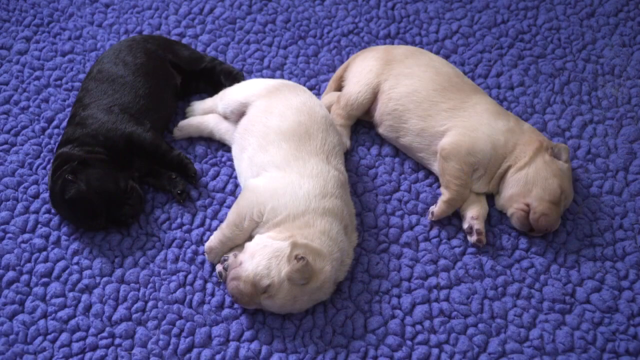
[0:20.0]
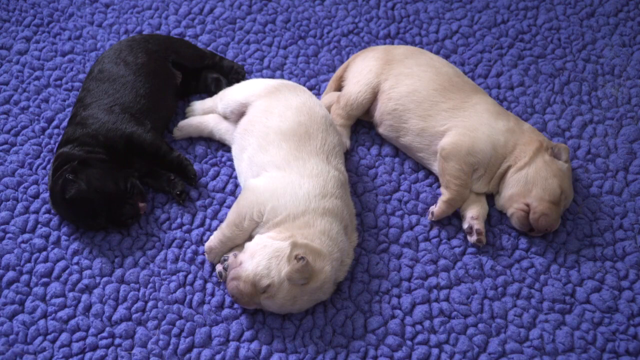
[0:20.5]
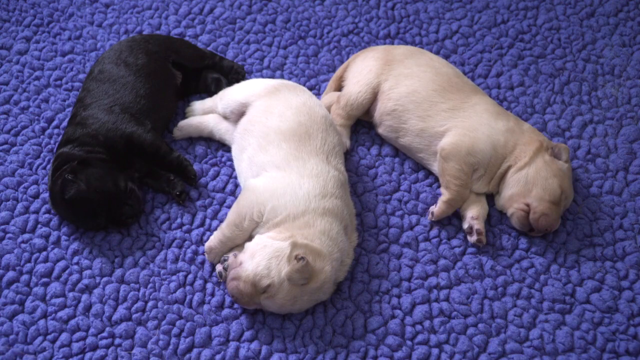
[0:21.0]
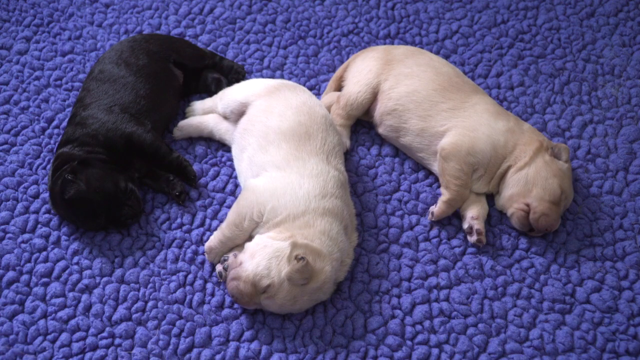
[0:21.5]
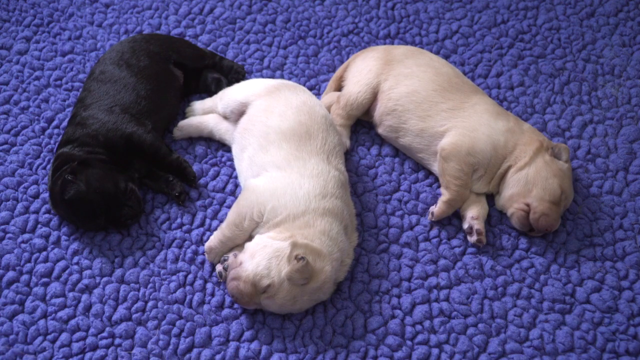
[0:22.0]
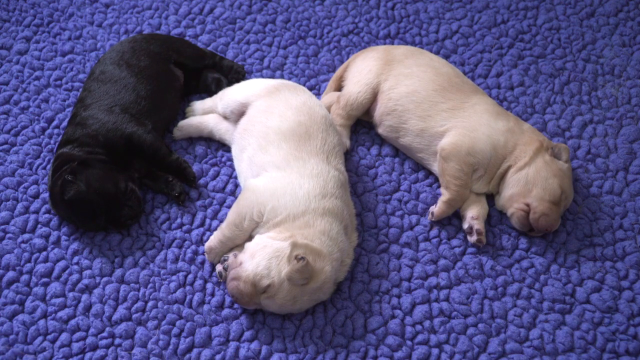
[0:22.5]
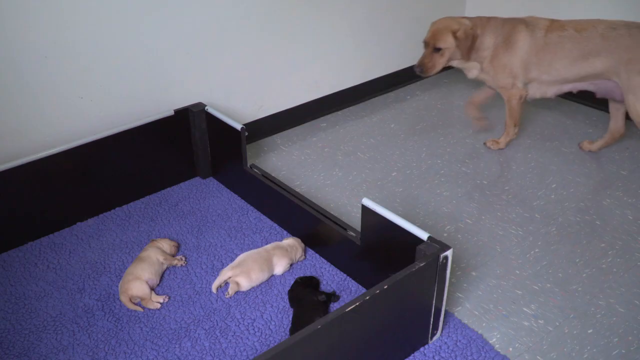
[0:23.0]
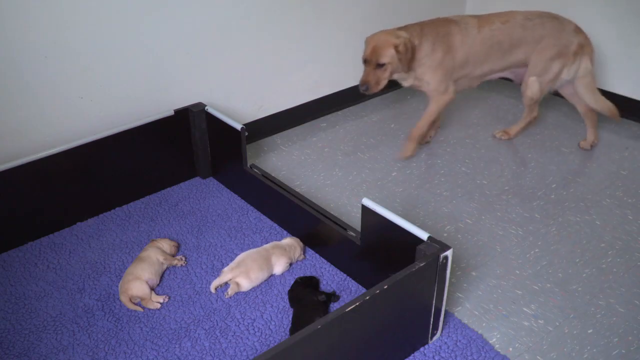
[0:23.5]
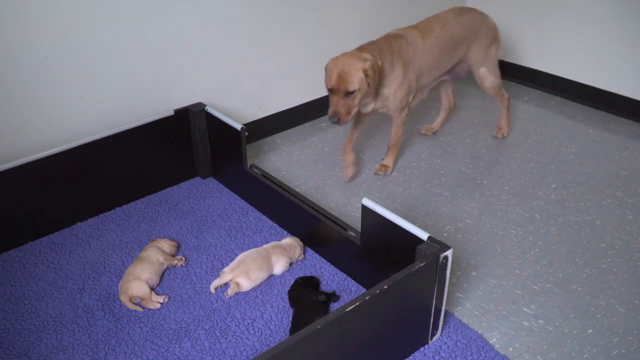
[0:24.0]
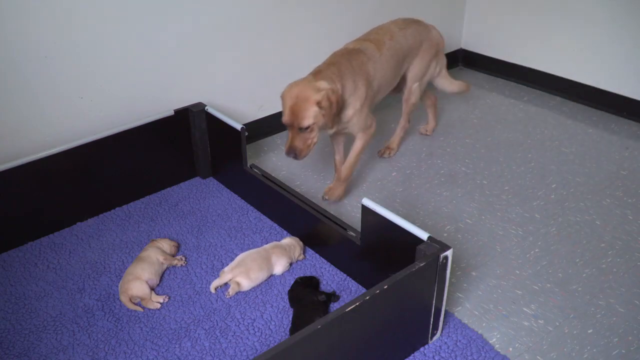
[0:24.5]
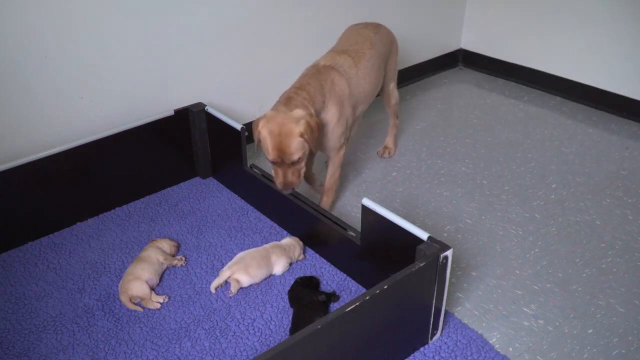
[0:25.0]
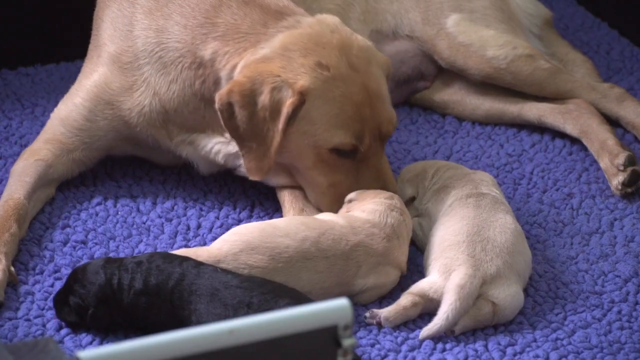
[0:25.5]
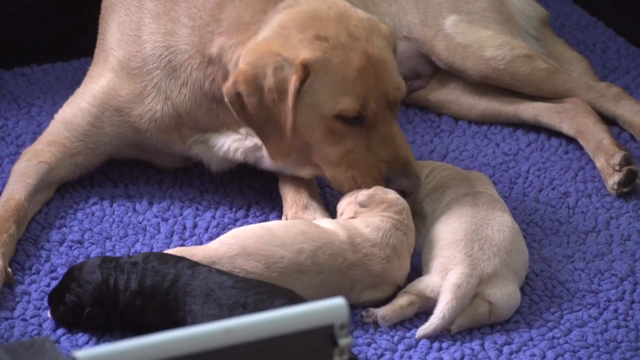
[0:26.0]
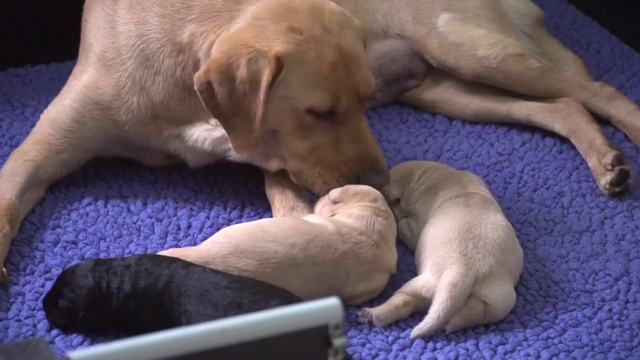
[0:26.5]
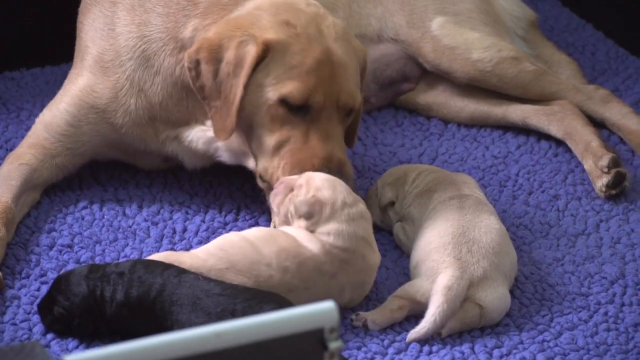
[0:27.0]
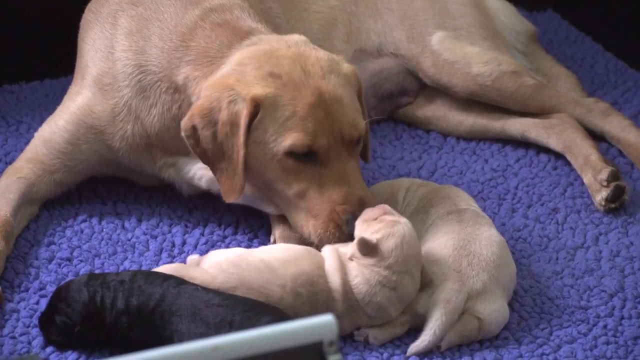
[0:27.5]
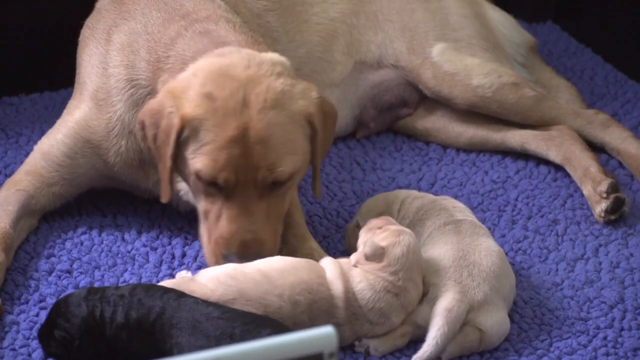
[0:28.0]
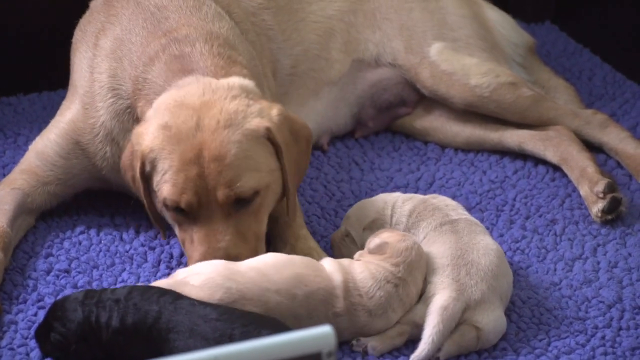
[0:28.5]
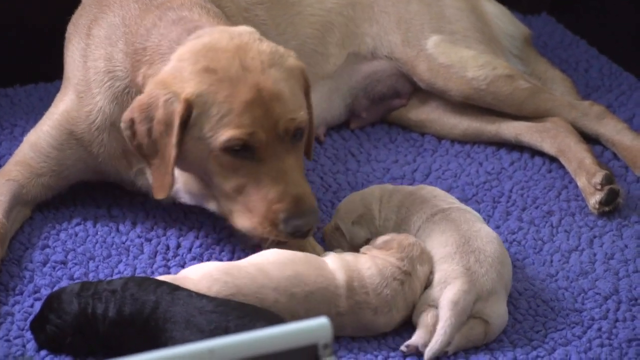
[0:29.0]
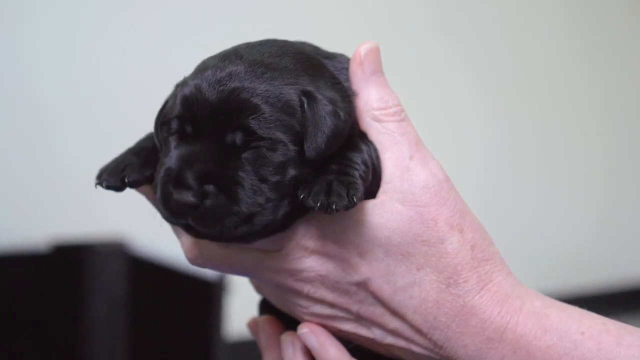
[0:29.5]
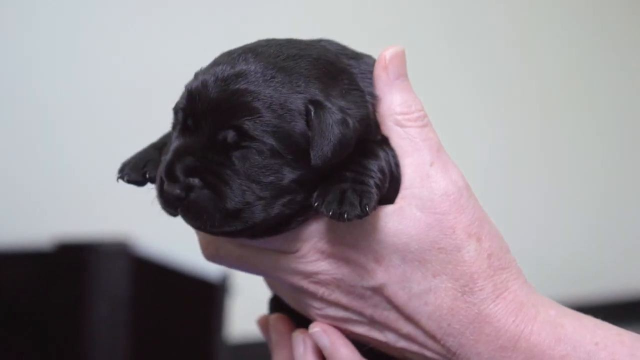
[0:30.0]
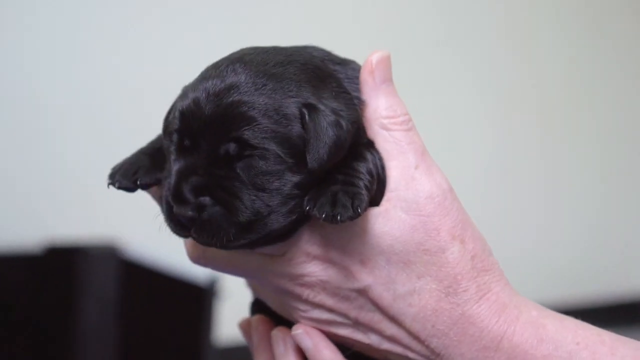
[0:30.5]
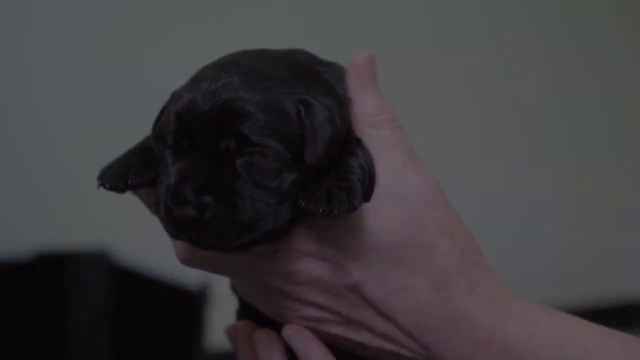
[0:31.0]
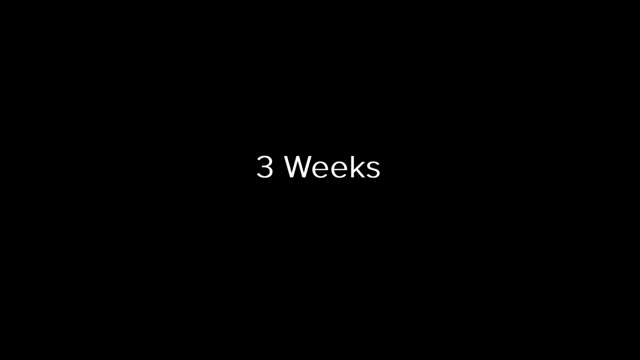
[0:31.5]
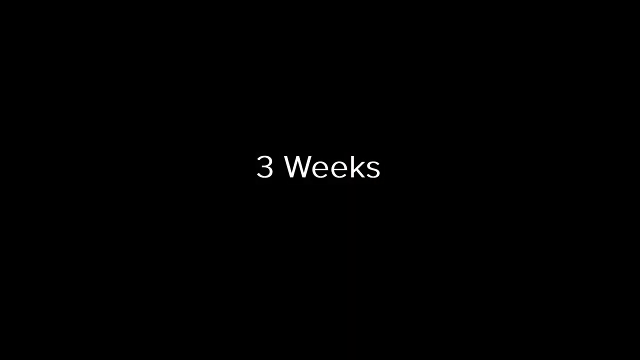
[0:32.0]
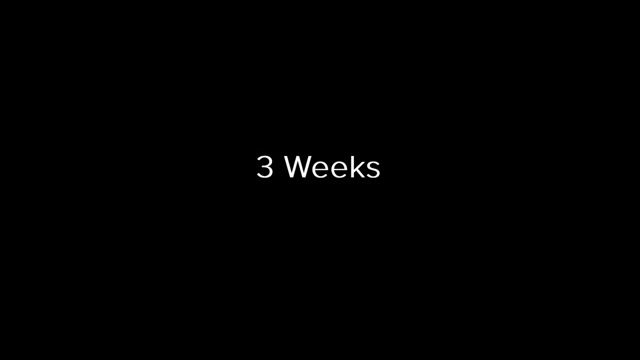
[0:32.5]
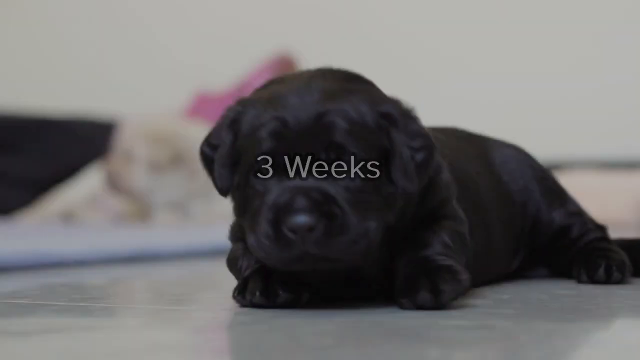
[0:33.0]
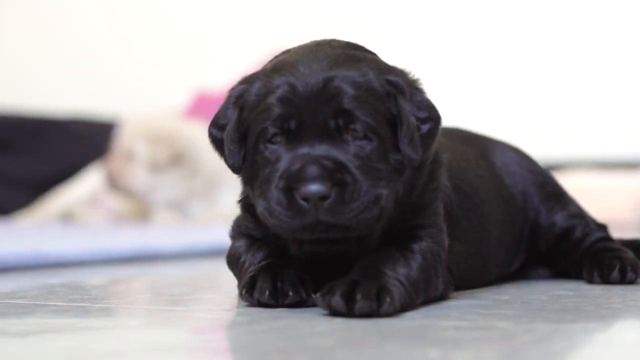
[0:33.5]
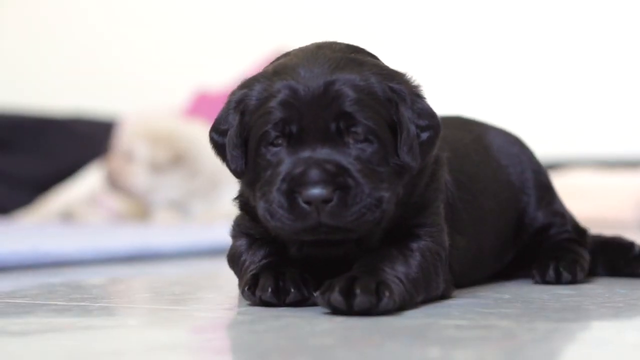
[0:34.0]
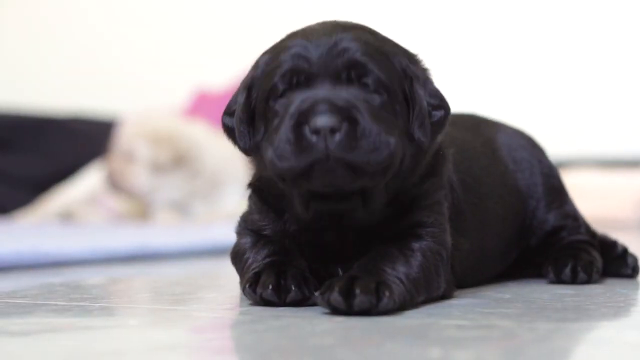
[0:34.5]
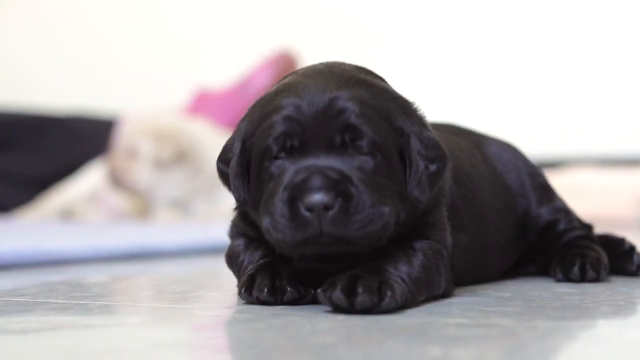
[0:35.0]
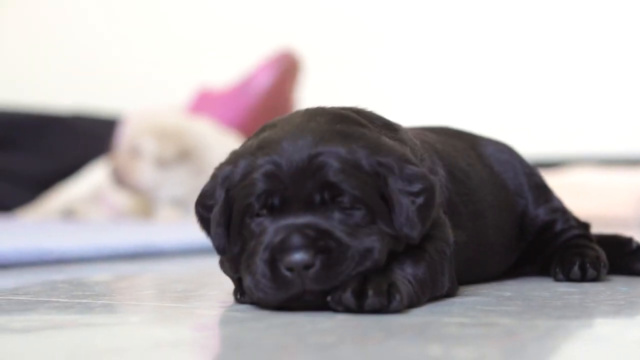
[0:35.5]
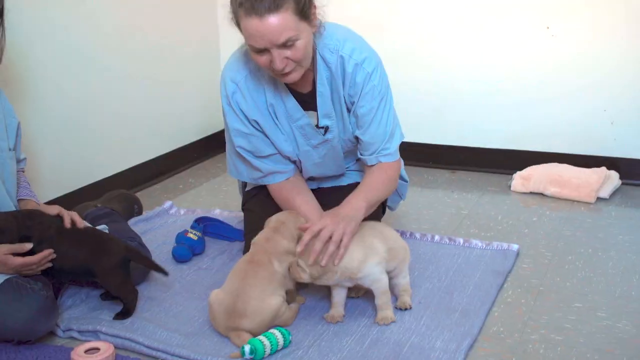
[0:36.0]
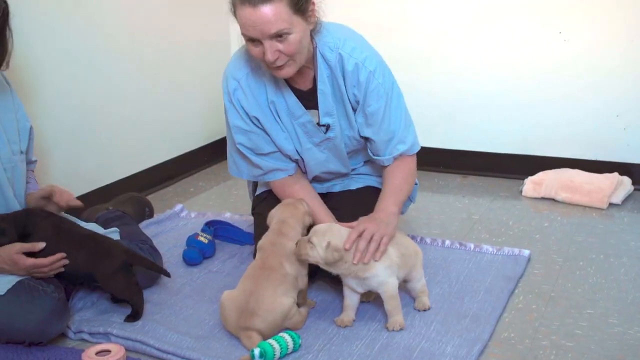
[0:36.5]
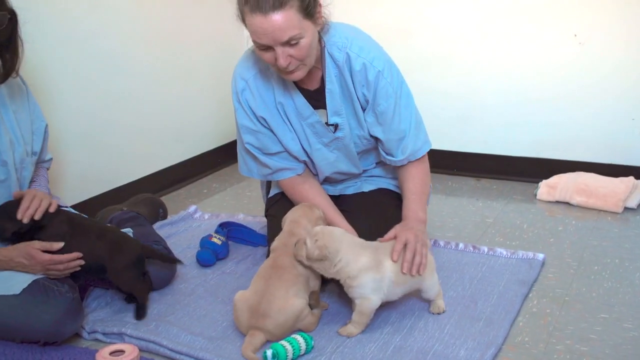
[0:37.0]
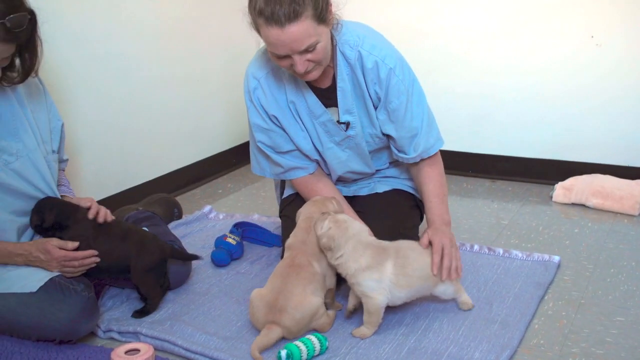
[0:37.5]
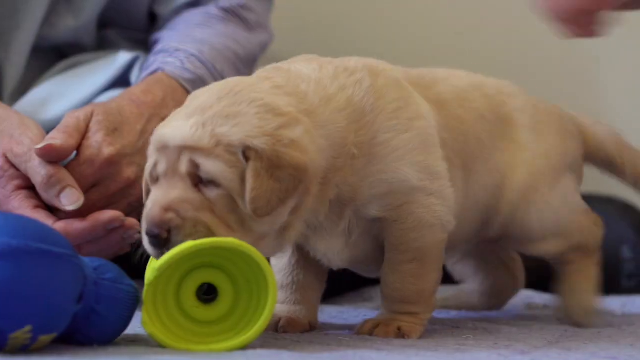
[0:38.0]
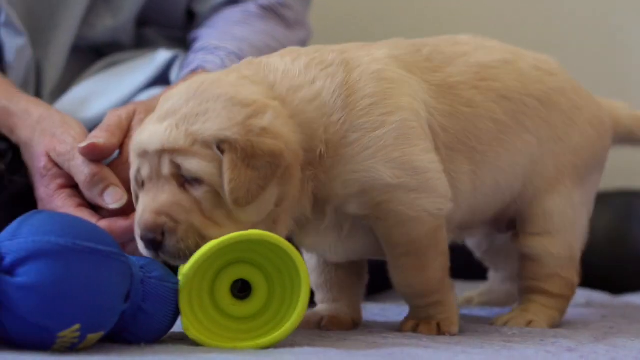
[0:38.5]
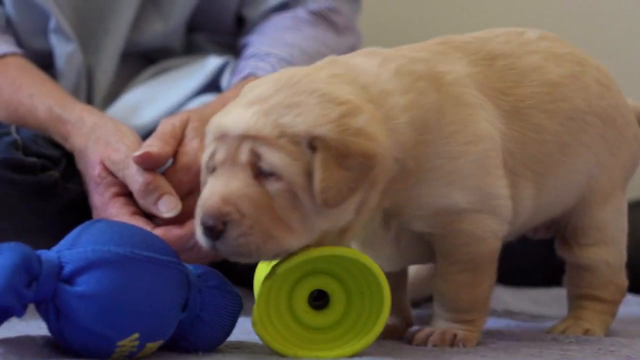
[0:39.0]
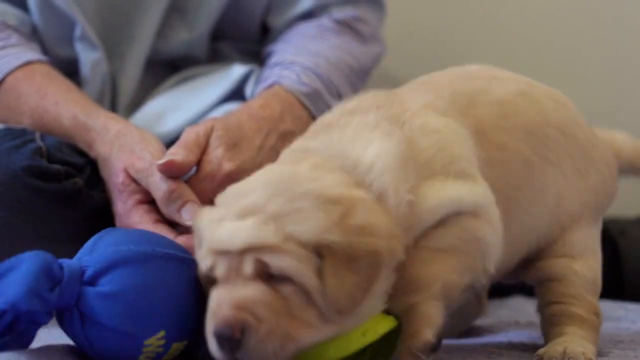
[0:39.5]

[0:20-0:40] The puppies are in a very small pen that their mother can wander into, and she washes them with her tongue. One of the medical workers holds the black puppy in her hands; it is tiny enough to be held in the palm of one hand. The video then moves on to when the puppies are three weeks old. The black puppy's fur looks quite sleek, its eyes are open and it is able to walk. A couple of nurses at the vets play with the three puppies, which look contented. The puppies play with one another, one golden puppy grooms the other, and there are toys on the floor that one of them struggles not to trip over.